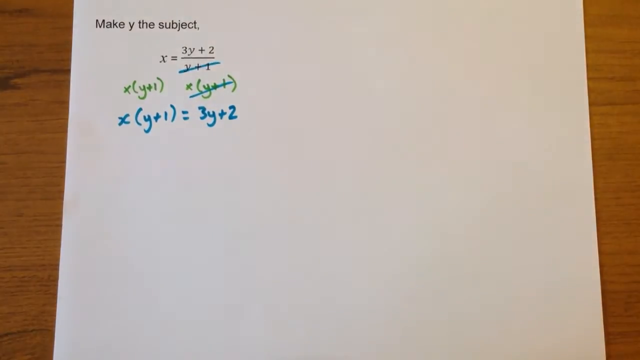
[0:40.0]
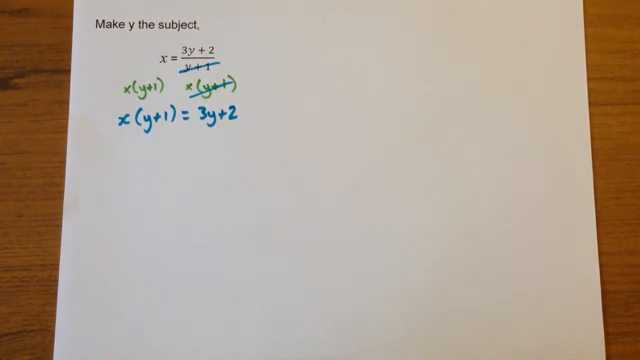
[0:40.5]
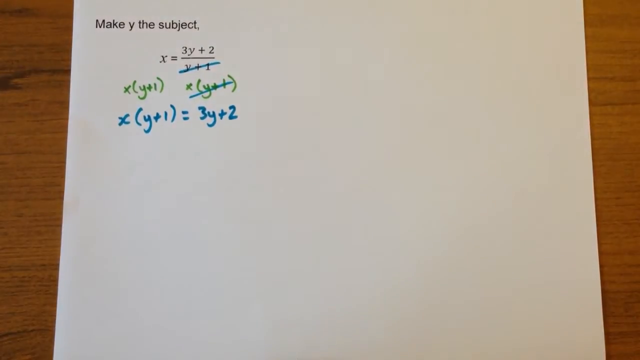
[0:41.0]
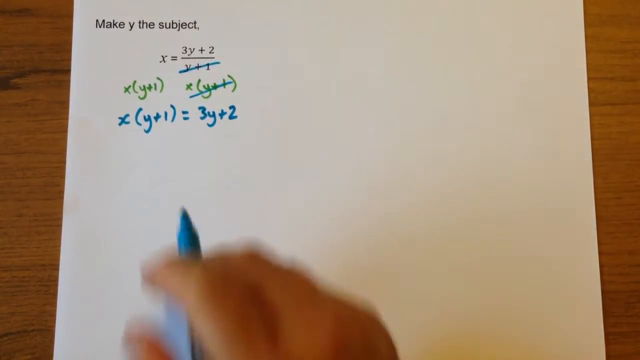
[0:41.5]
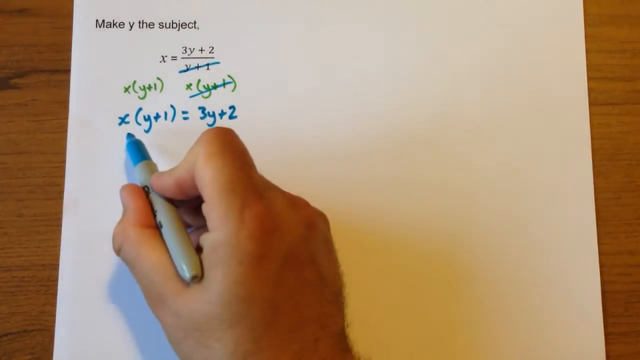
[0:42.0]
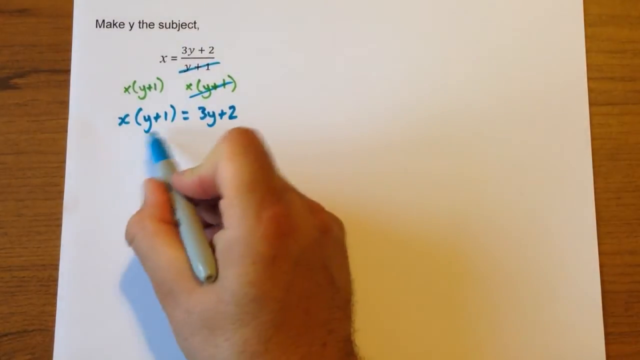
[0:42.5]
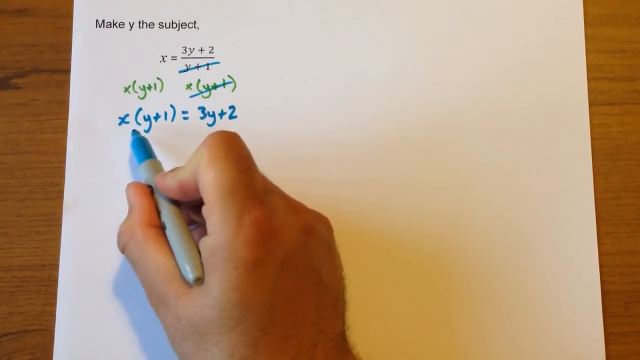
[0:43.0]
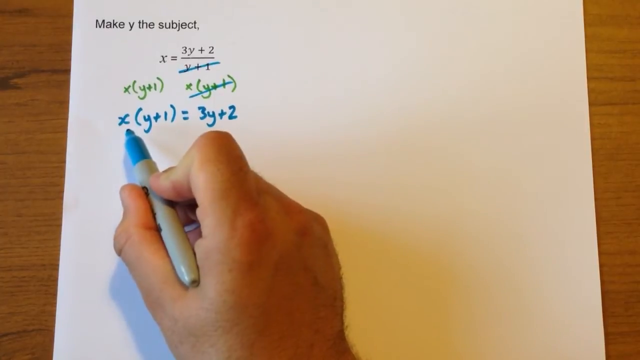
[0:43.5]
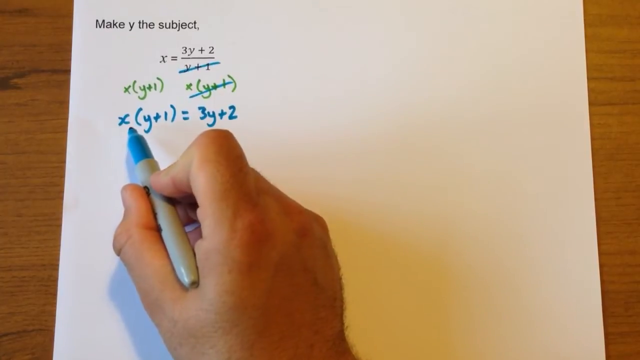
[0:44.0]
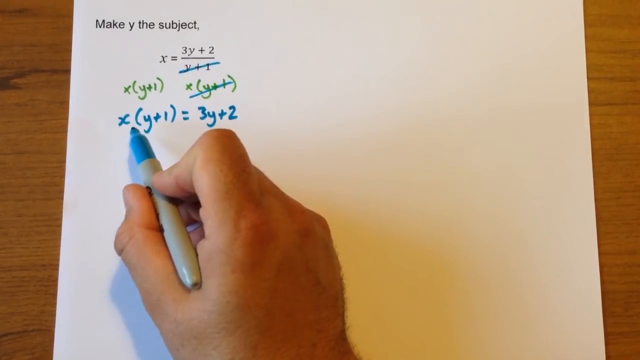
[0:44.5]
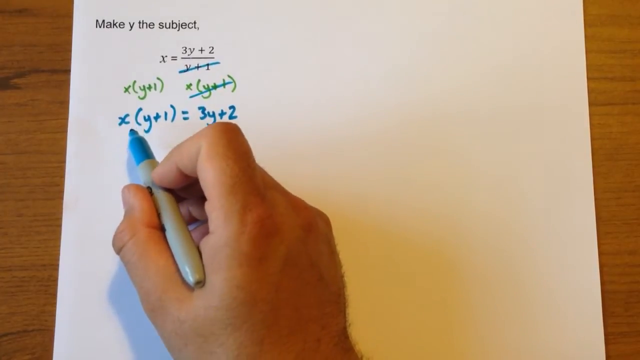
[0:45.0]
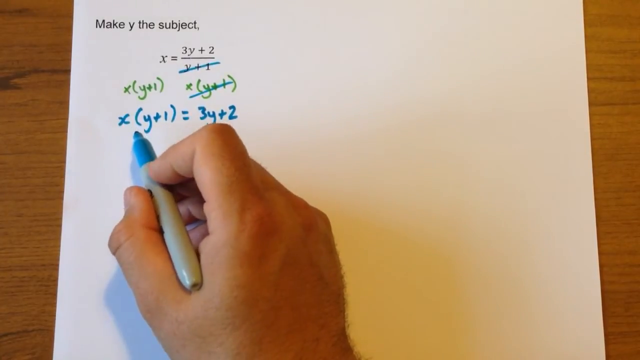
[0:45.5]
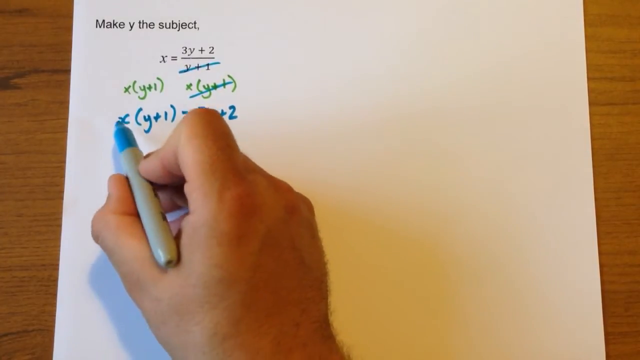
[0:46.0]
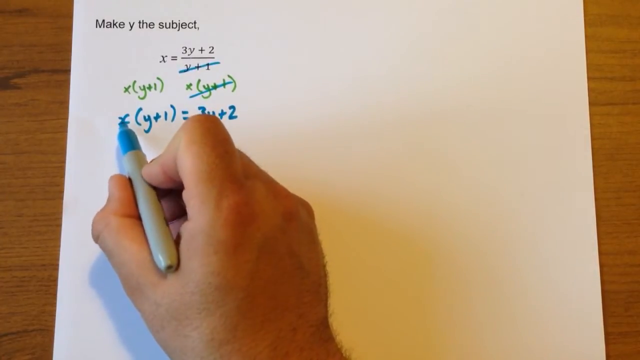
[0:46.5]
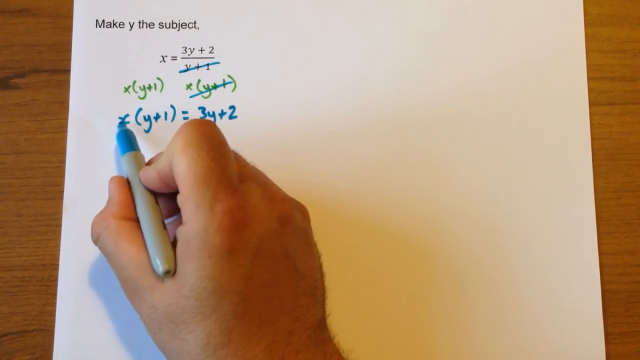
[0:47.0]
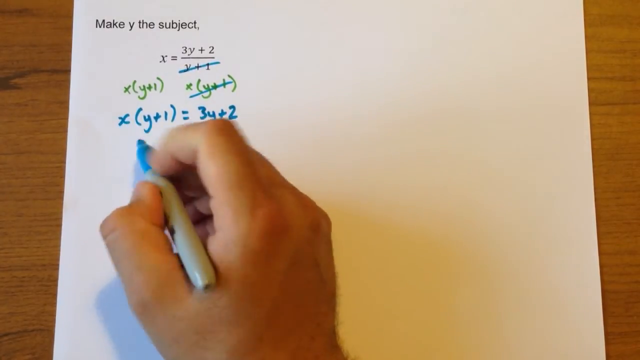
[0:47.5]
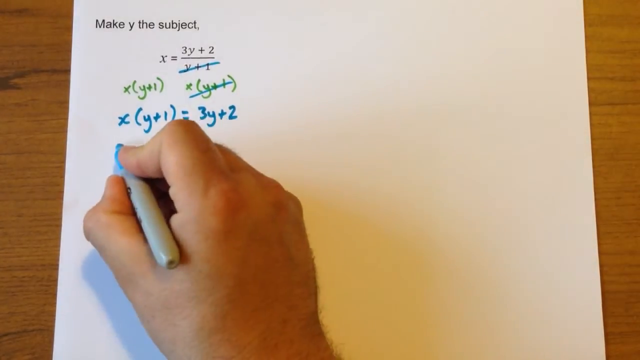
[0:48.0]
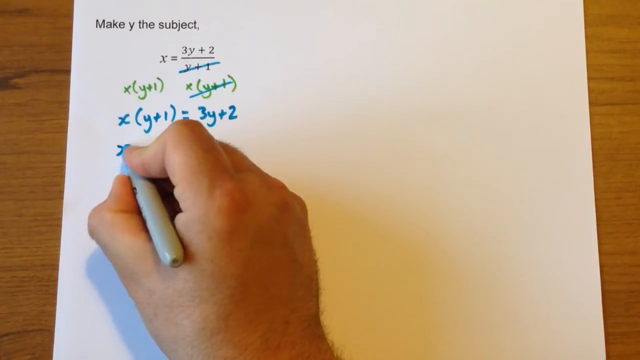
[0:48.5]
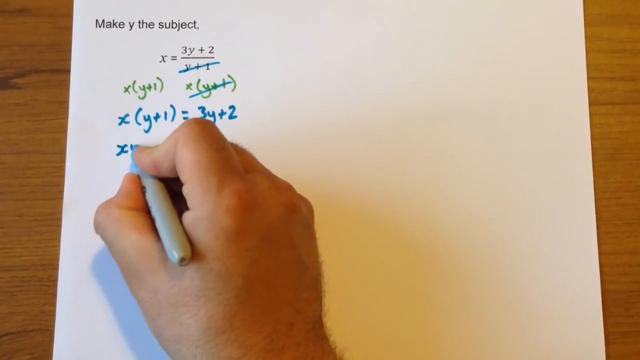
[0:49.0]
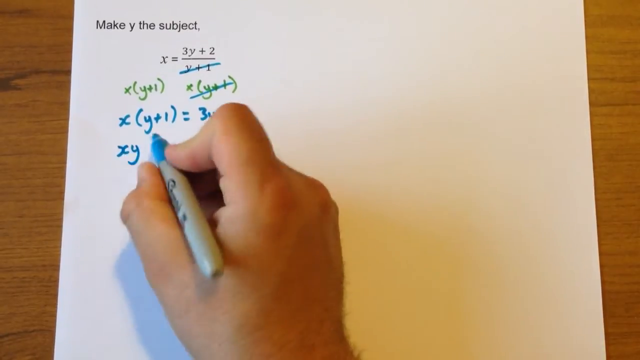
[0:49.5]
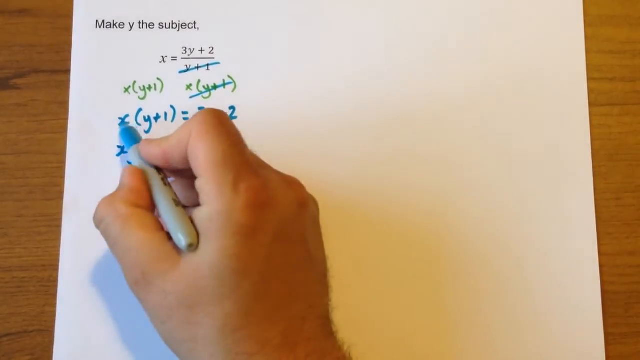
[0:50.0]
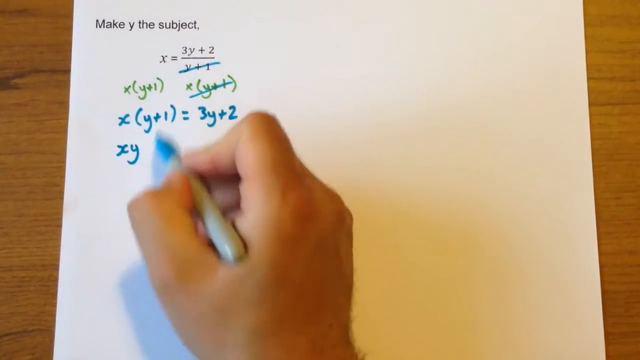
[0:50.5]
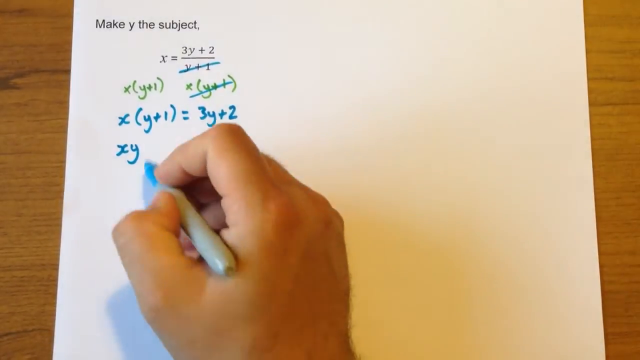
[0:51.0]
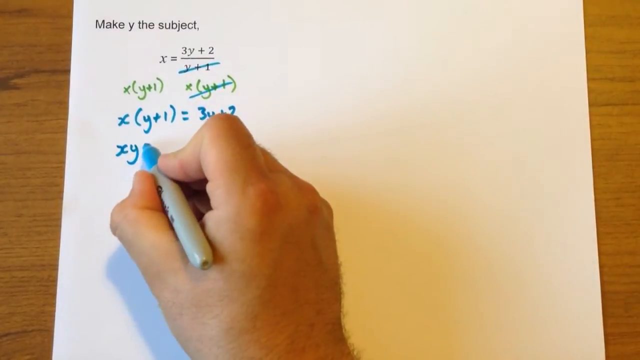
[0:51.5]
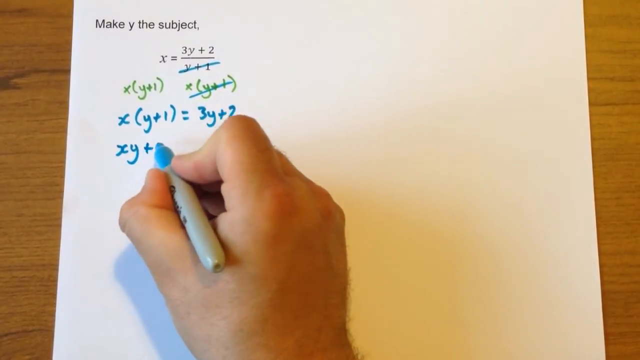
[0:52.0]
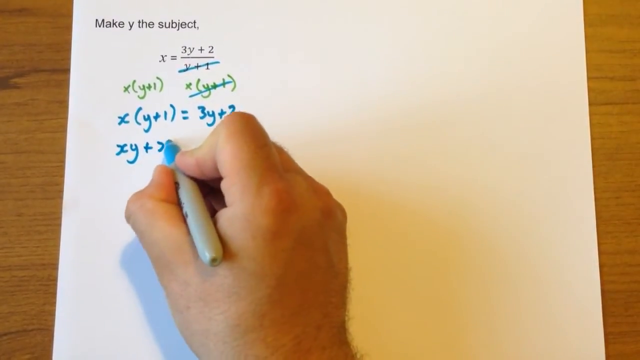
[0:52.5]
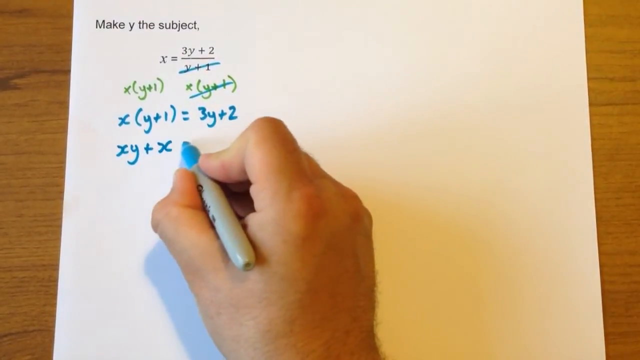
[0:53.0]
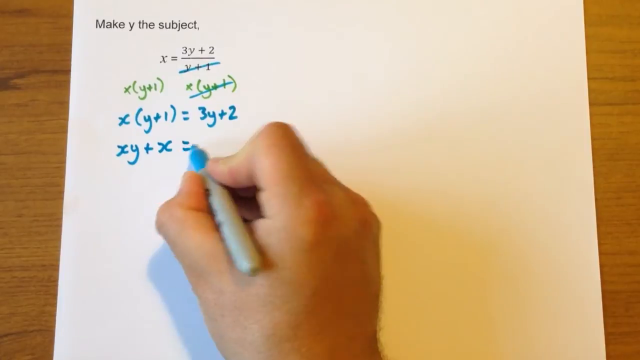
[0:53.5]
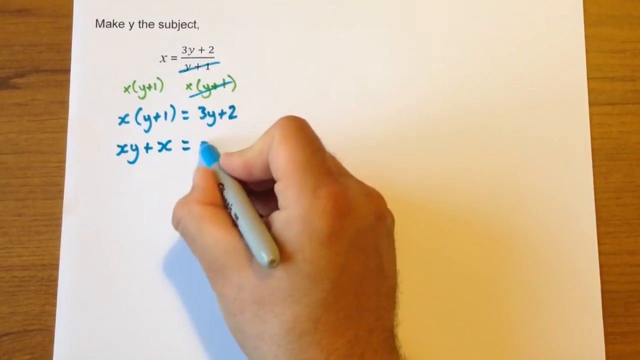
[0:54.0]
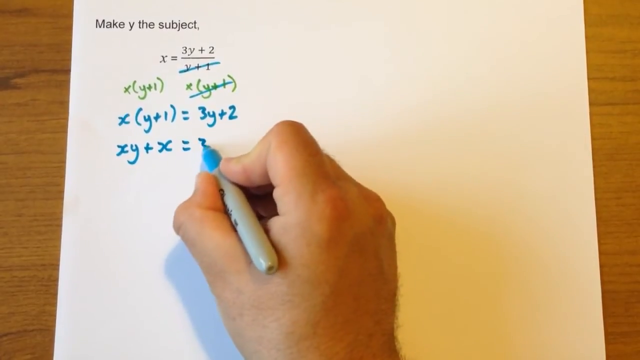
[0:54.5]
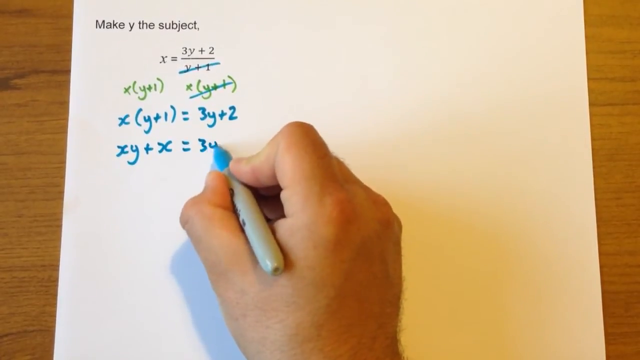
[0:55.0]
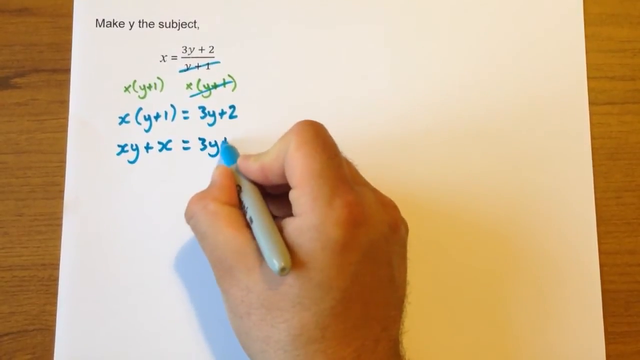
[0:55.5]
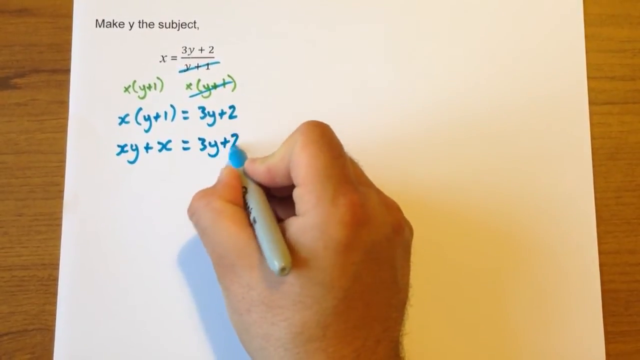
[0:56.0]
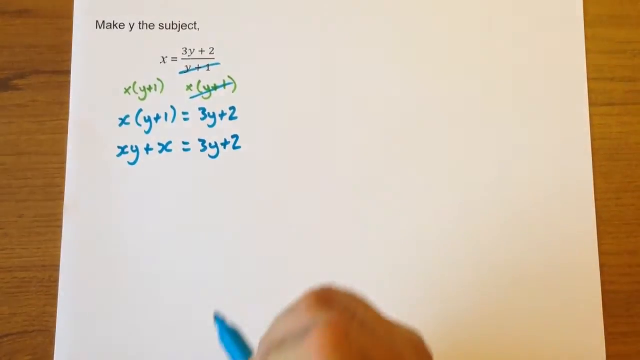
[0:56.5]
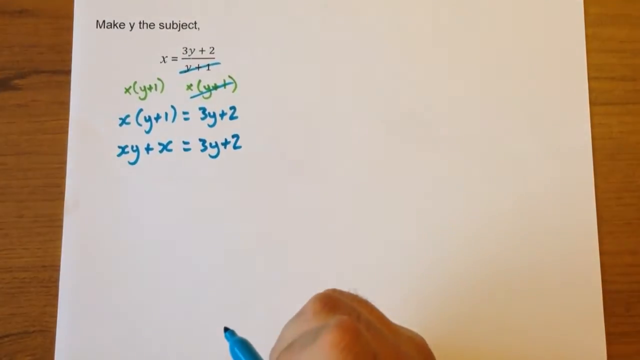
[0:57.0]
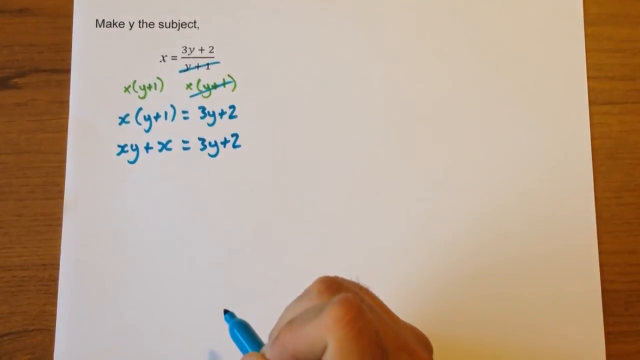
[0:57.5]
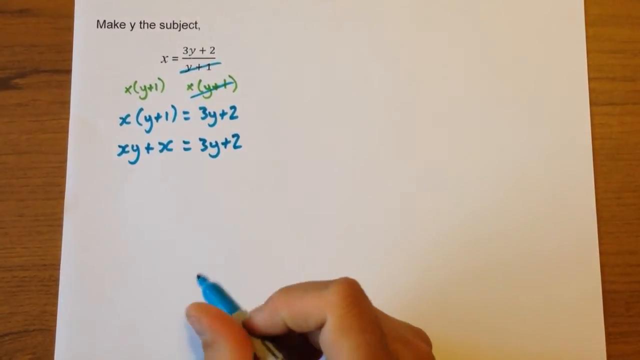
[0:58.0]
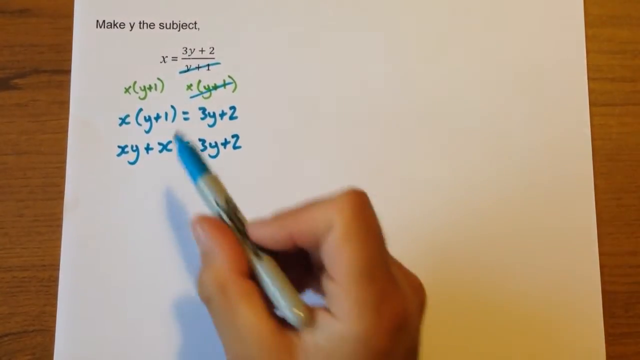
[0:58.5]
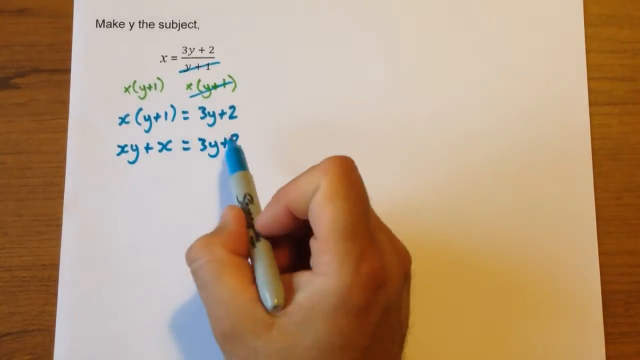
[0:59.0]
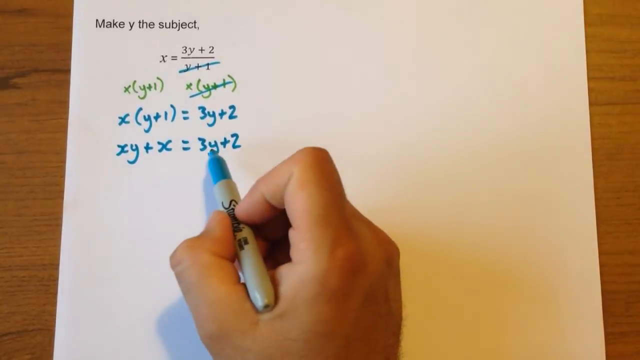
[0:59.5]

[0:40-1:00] A mathematical equation is being solved on a white piece of paper on a brown table. In the top left corner of the paper, written in black, is "make y the subject," followed by a comma, and underneath is the equation x = (3y + 2)/(y + 1). A male right hand holding a green or blue highlighter is visible. Written in green are x(y + 1) and the same x(y + 1) again. Underneath that, written in blue, is x(y + 1) = 3y + 2.